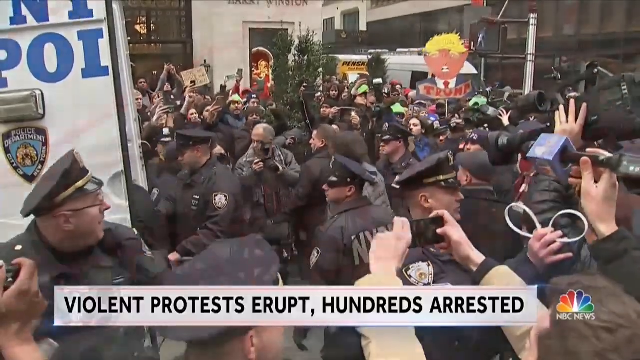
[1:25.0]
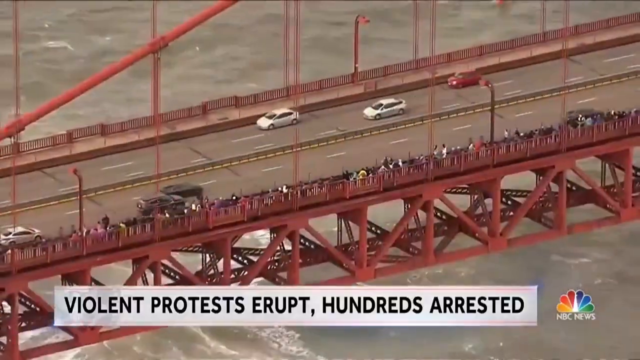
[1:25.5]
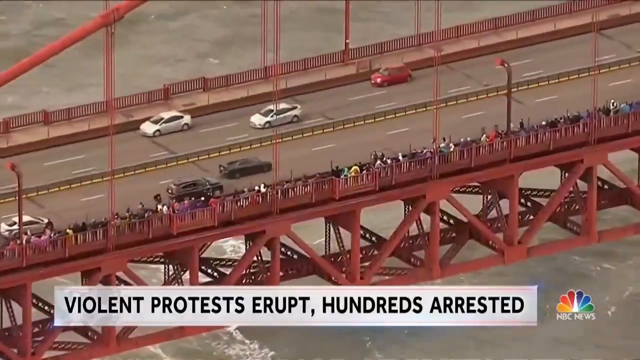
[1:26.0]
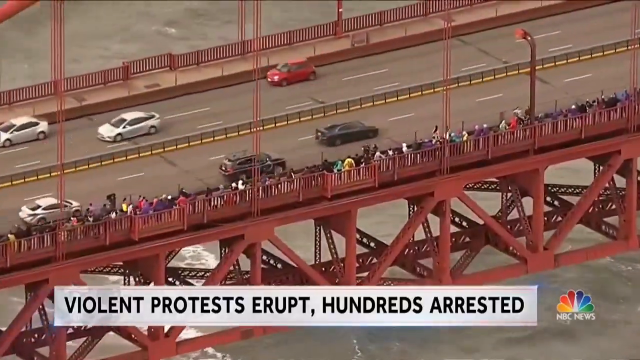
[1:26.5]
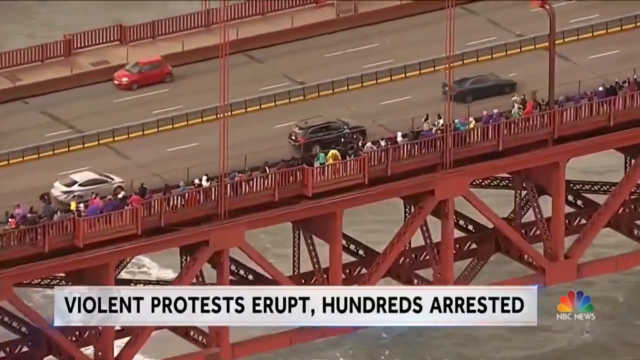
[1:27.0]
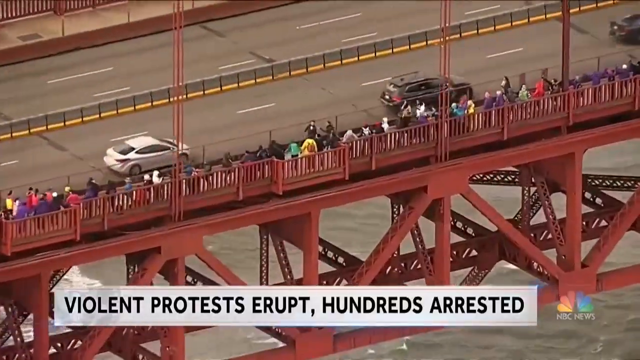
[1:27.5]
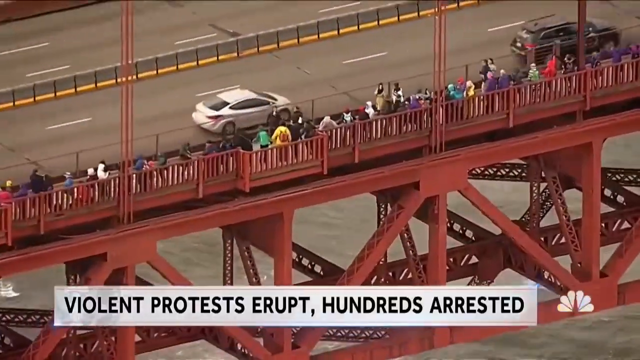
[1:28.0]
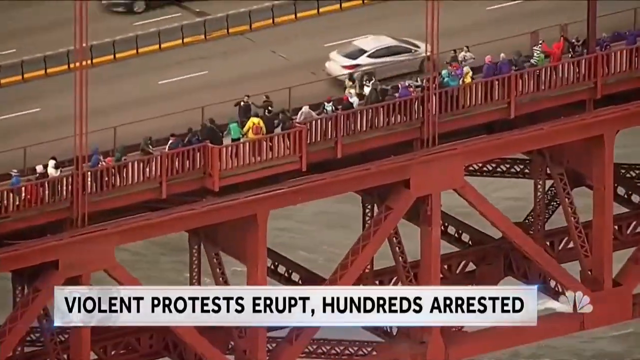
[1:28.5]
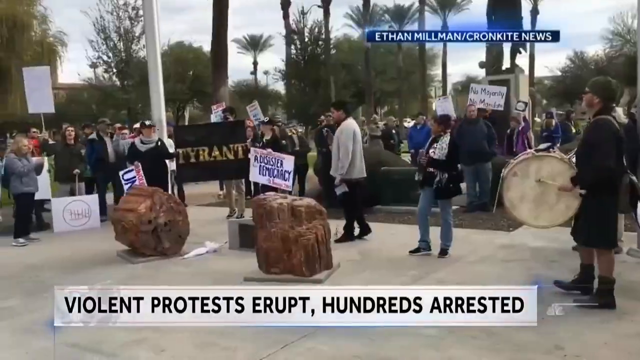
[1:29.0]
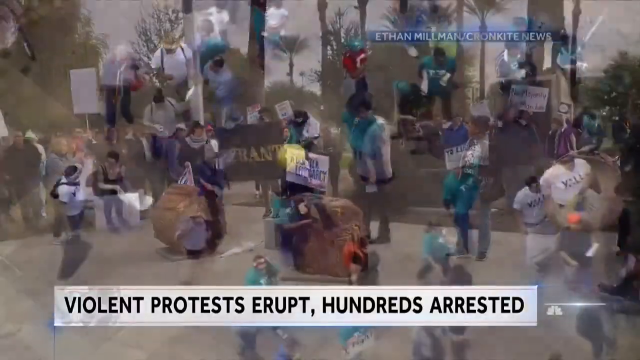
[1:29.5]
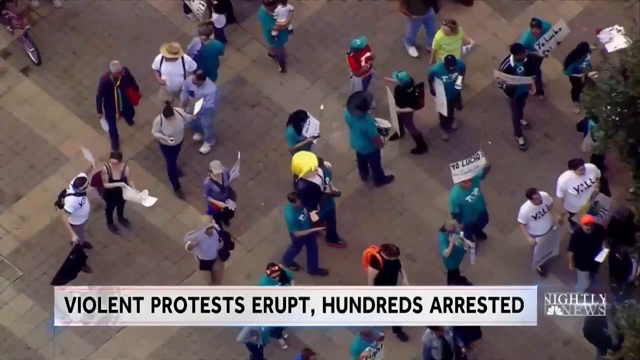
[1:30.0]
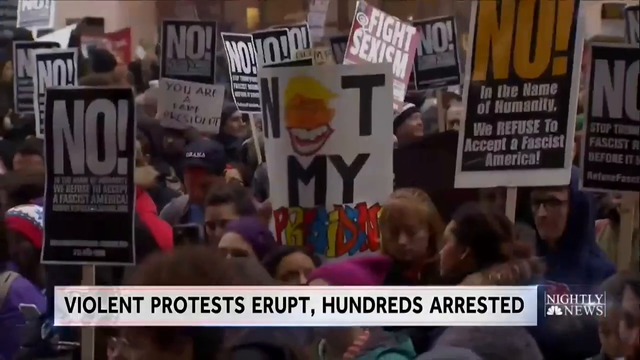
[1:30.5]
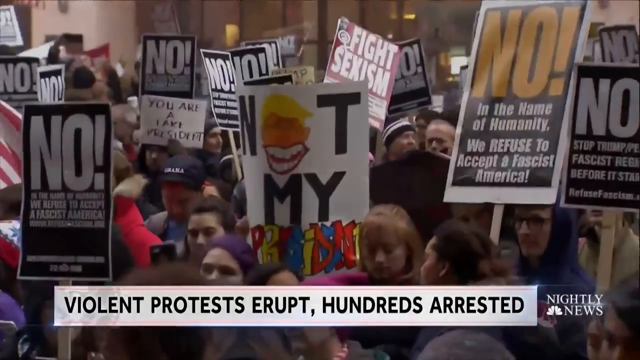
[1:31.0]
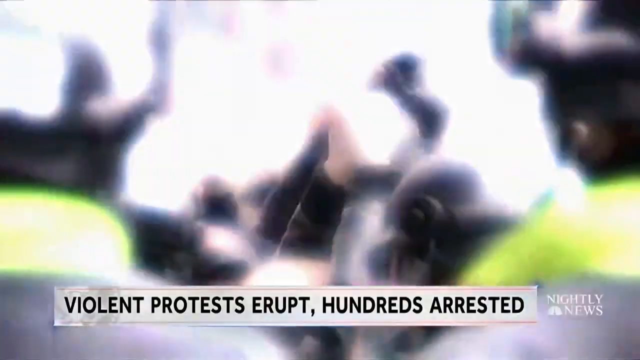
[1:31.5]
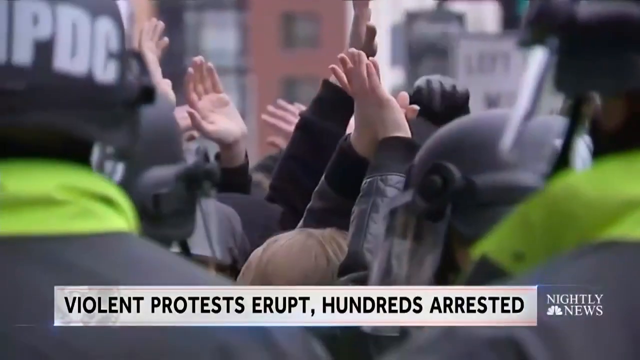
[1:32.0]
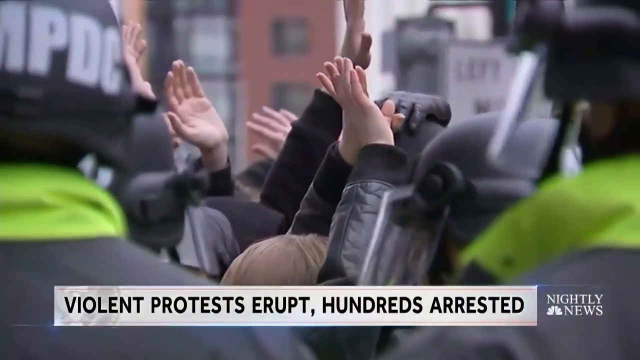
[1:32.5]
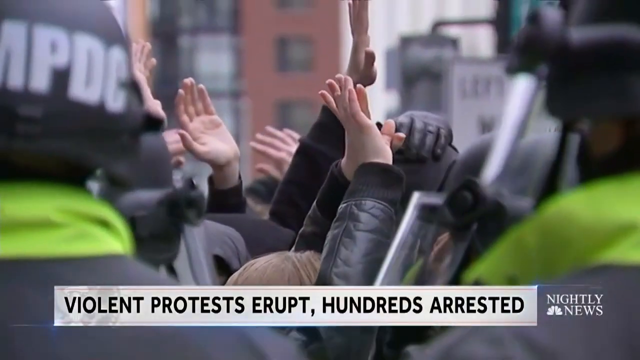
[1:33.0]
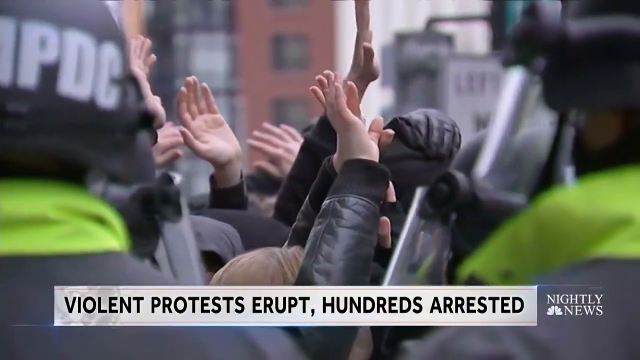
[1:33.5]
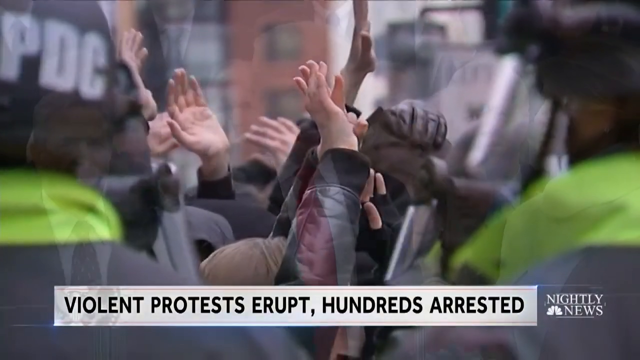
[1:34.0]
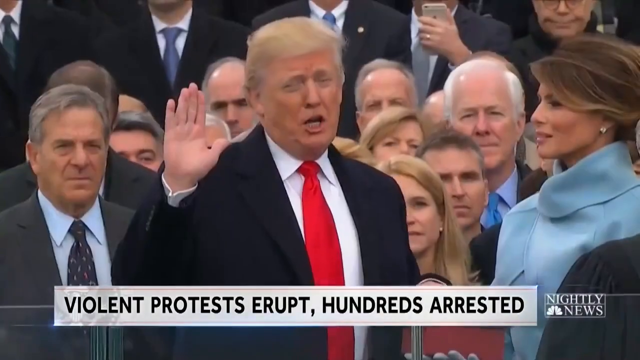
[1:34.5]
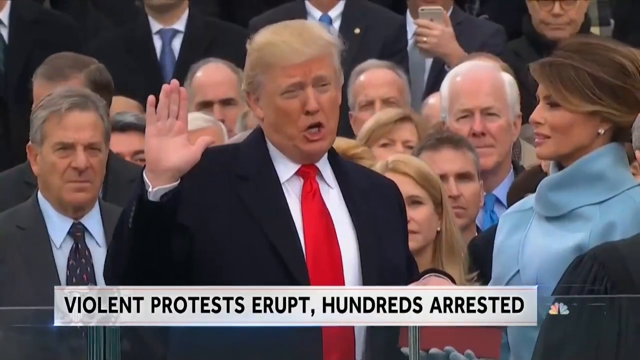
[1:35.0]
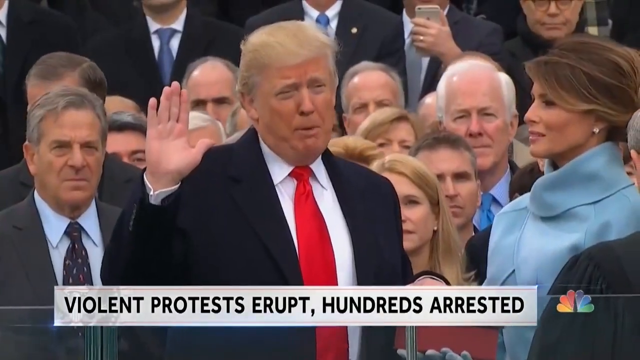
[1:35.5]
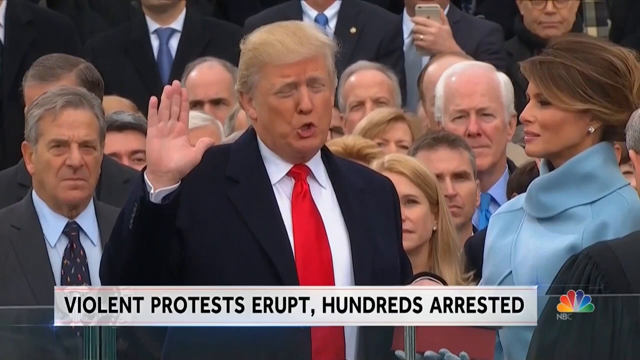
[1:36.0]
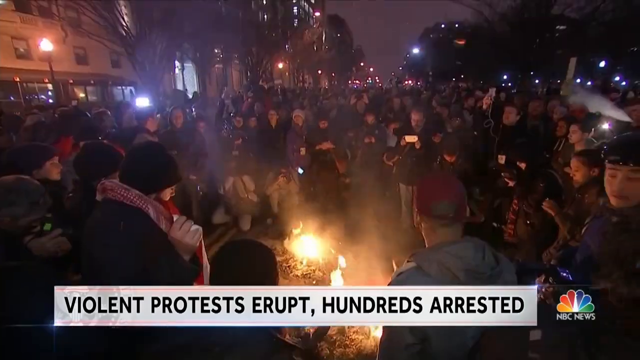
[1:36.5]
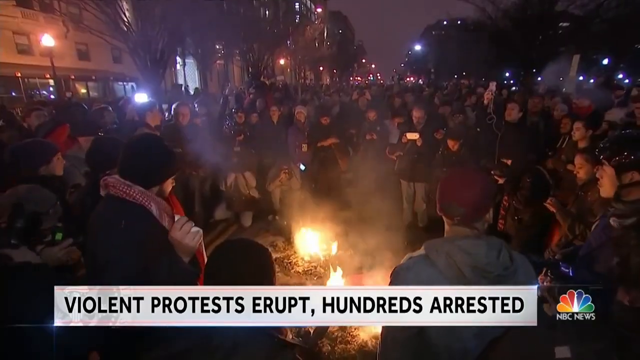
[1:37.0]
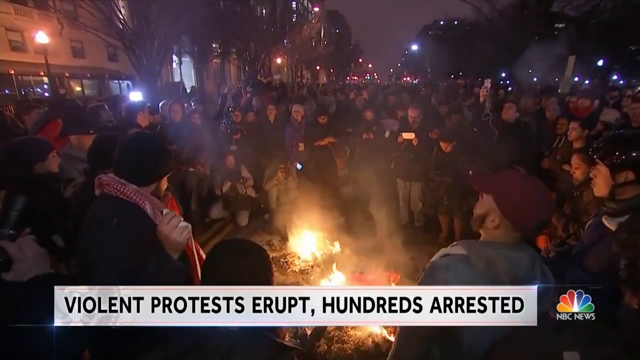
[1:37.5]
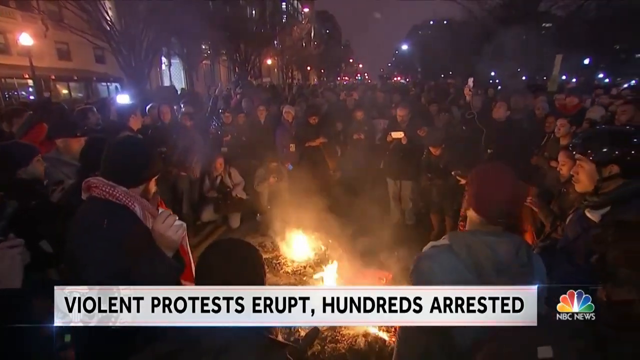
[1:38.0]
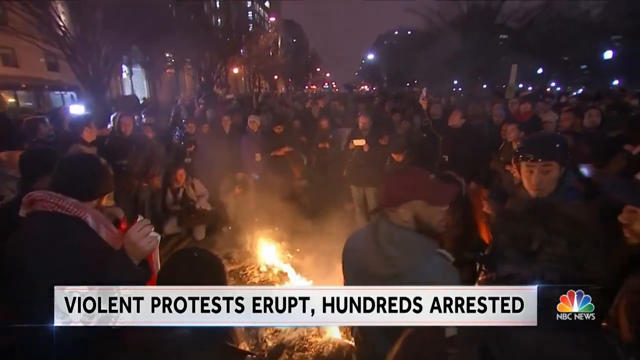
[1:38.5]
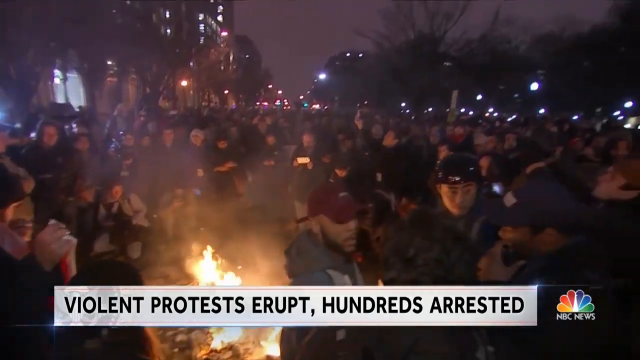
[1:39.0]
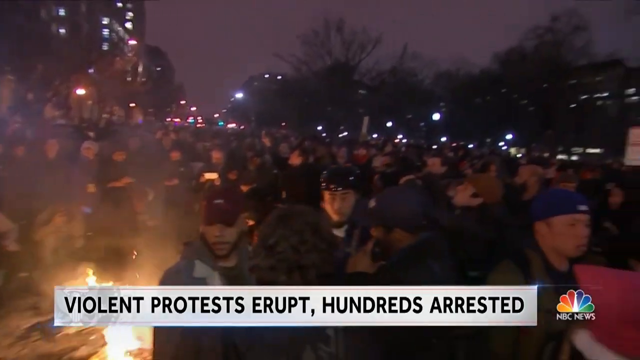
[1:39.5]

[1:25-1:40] An overhead shot from a helicopter camera zooms in slowly on people protesting on a bridge. Multiple shots show people protesting in various ways. At night, people stand around a large fire to keep warm in a cold cityscape. People are surrounded by police. President Donald Trump is sworn in with a Bible, with his colleagues in the background looking on and his wife, in blue, right next to him smiling at him.